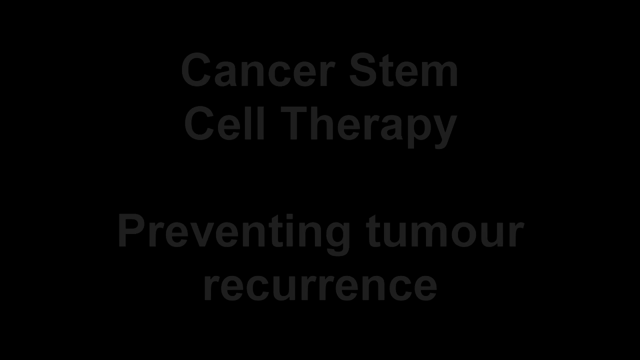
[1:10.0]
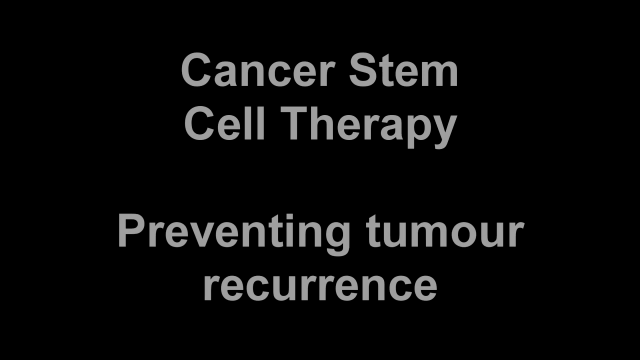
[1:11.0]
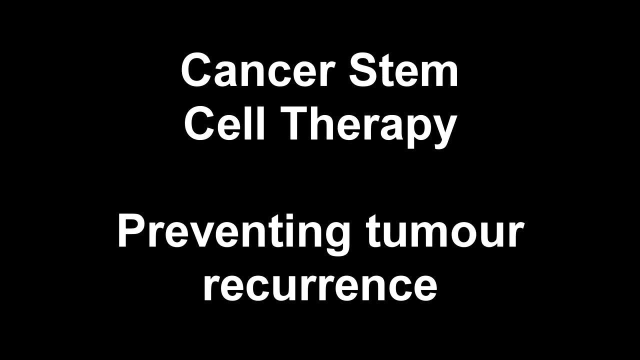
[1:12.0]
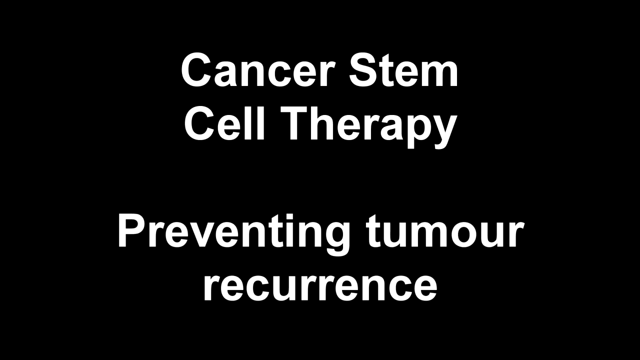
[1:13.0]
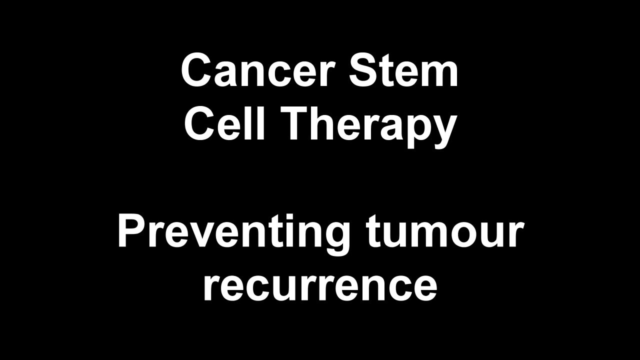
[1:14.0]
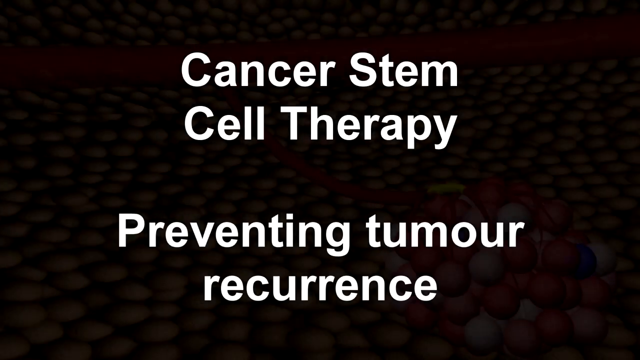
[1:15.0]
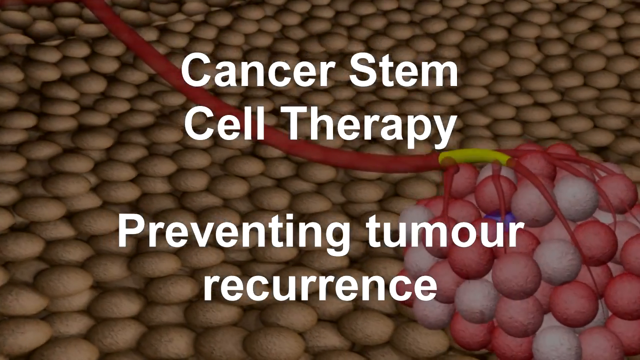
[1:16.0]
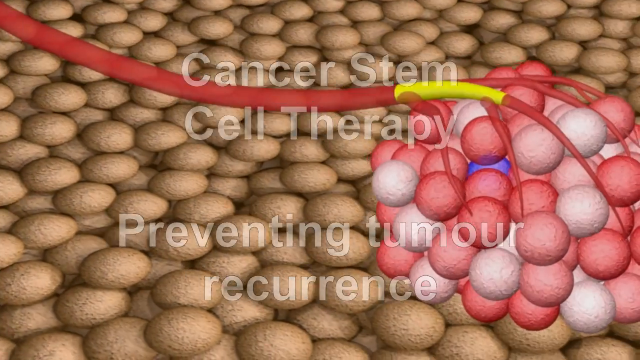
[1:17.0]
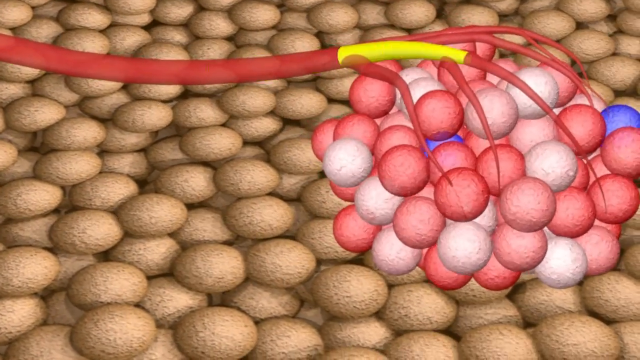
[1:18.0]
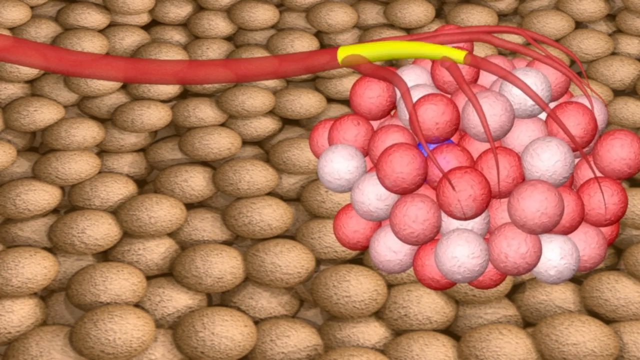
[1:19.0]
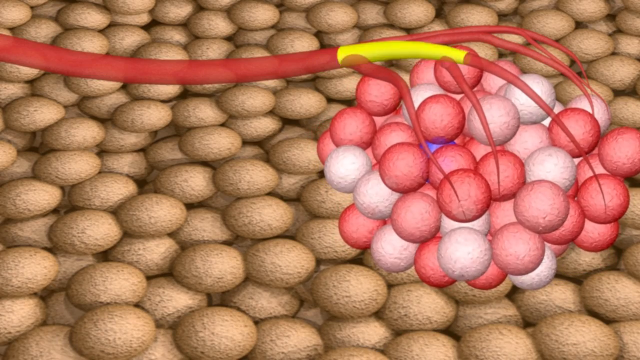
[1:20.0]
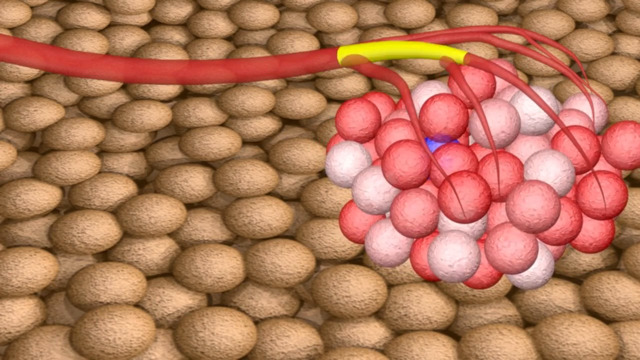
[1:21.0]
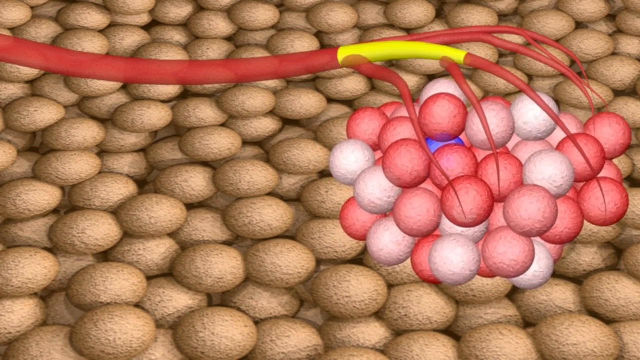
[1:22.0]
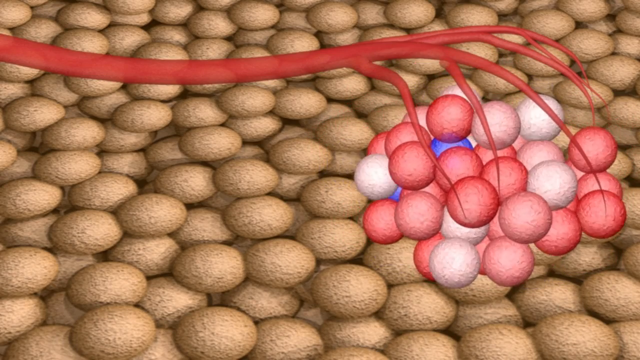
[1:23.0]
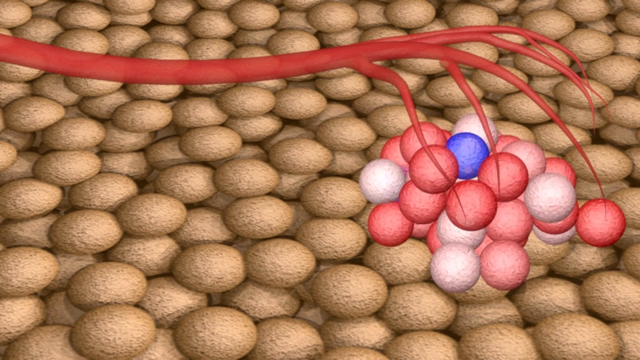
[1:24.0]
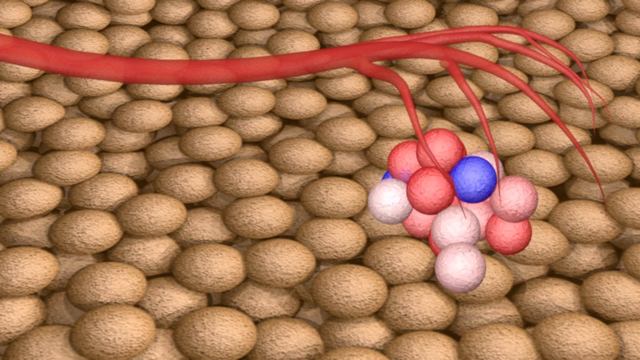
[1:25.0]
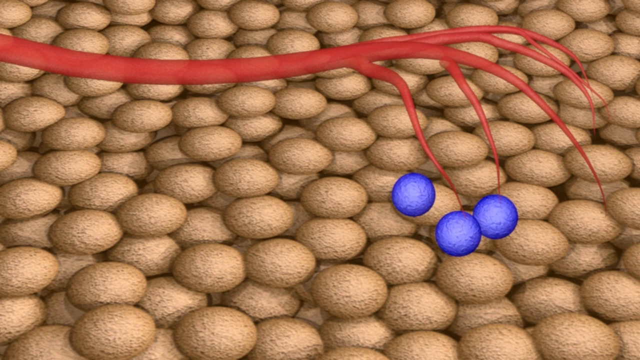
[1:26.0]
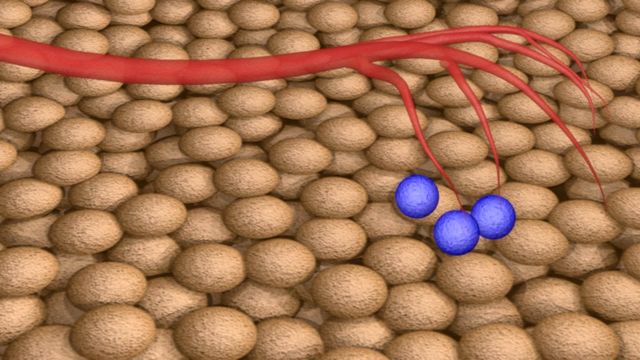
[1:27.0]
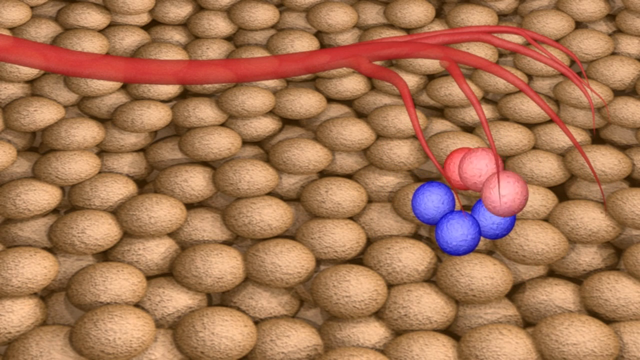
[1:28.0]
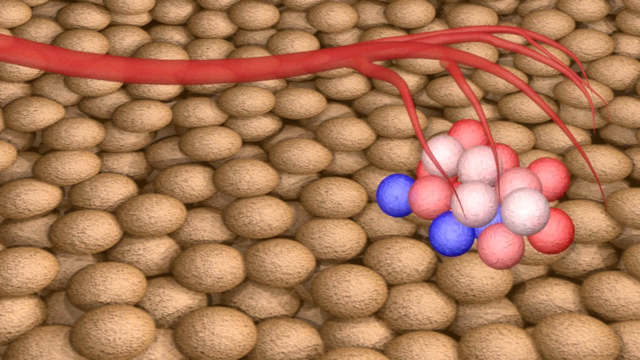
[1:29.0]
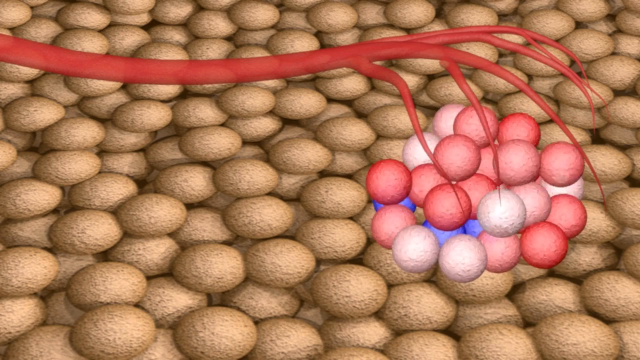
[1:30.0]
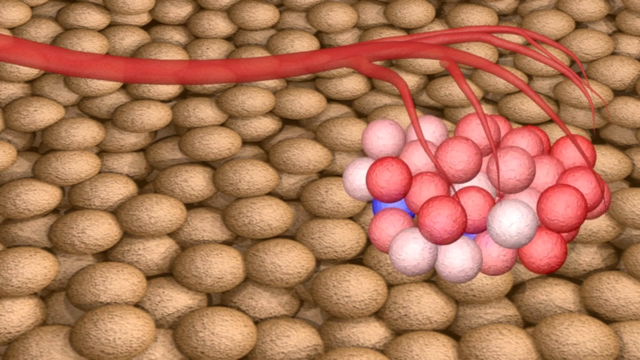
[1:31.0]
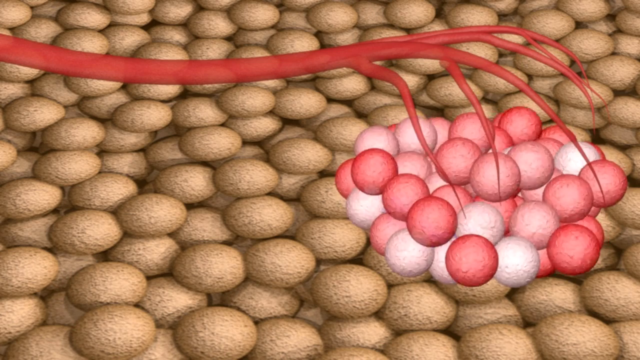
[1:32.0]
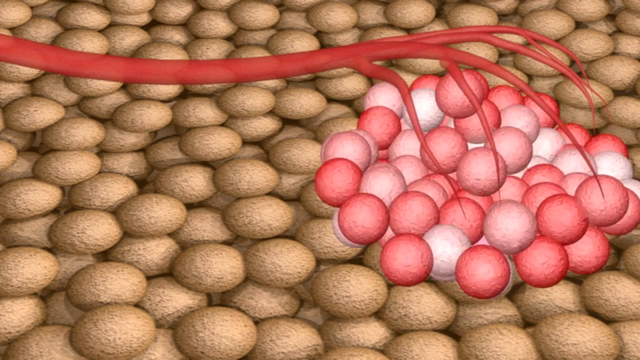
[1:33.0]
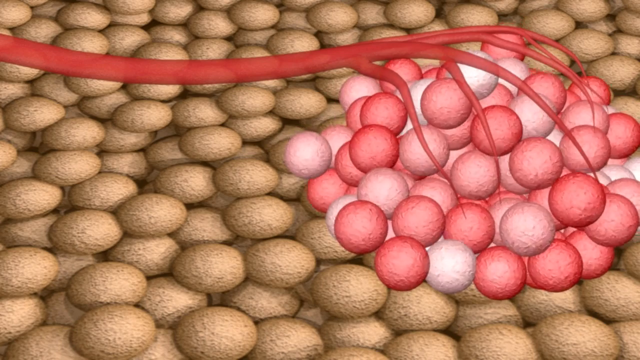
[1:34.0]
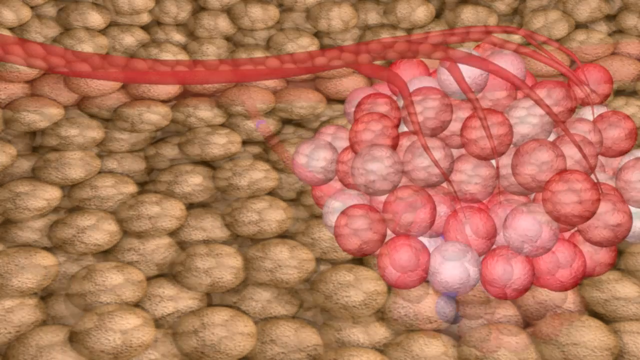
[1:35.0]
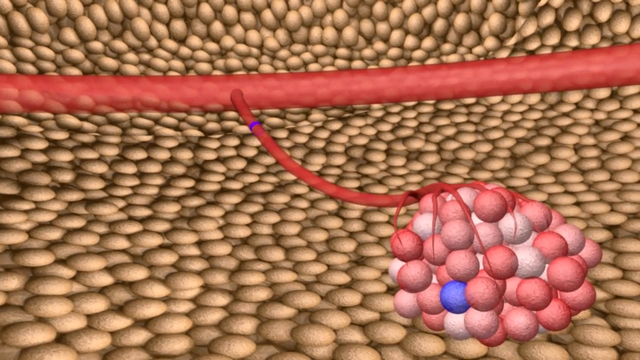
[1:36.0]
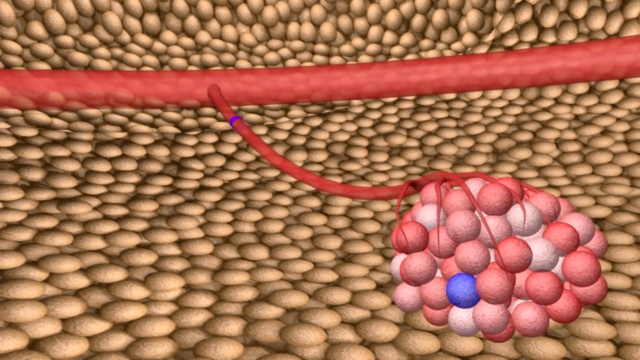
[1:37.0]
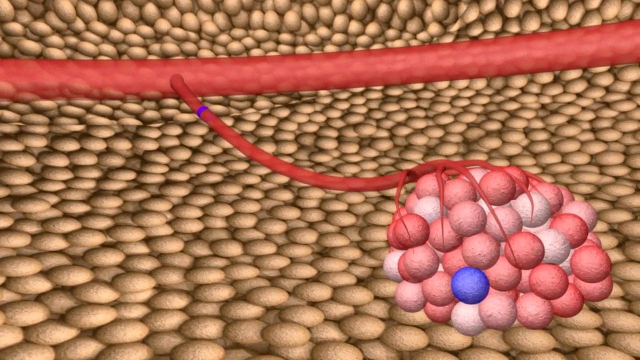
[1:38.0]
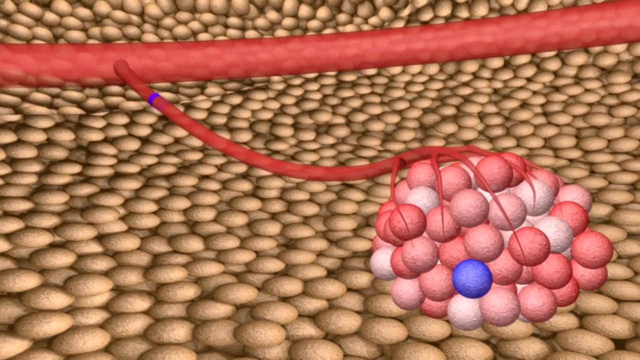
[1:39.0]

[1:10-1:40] White text fades into the center of the black screen, reading "cancer stem cell therapy preventing tumor reoccurrence." The next animation shows the large mass connected to the blood vessel. Large flashes of yellow light travel down the blood vessel into the smaller blood vessels surrounding the mass, which seems to be the tumor. As each yellow light reaches the mass, it removes one of the cells. The mass depletes, sinking lower and lower beneath the smaller blood vessels. The yellow flashes stop and the rest of the white and red balls disappear. Three blue balls are left behind, and they begin multiplying with red and white cells again, forming very quickly and growing even larger than before.